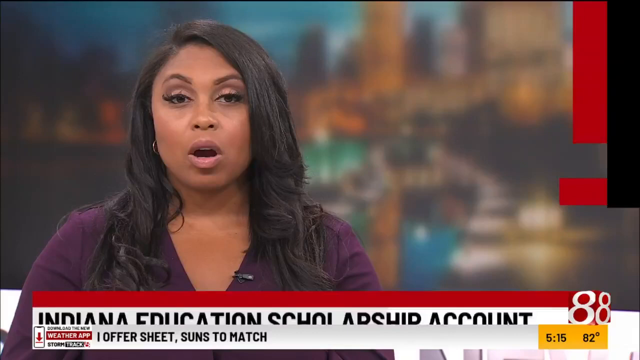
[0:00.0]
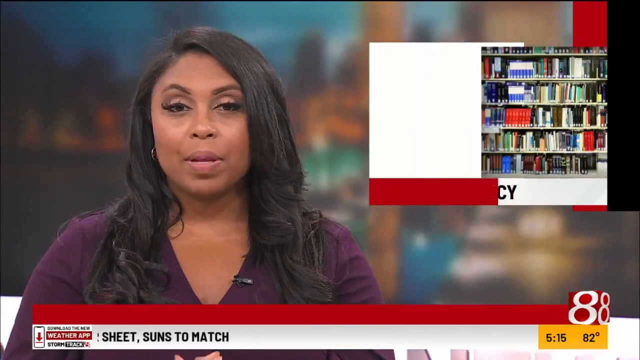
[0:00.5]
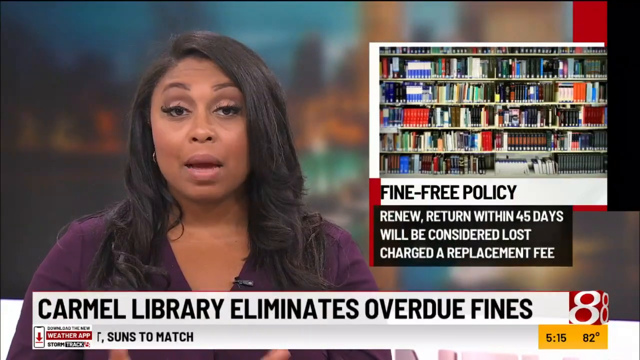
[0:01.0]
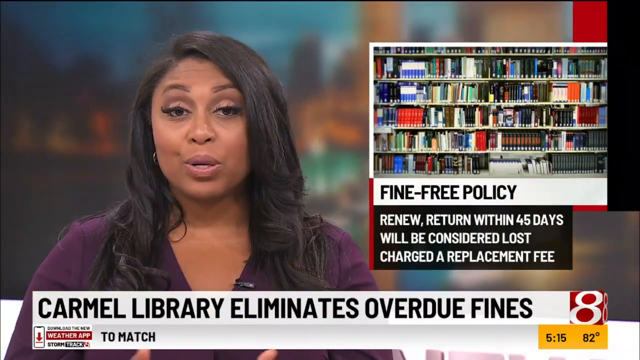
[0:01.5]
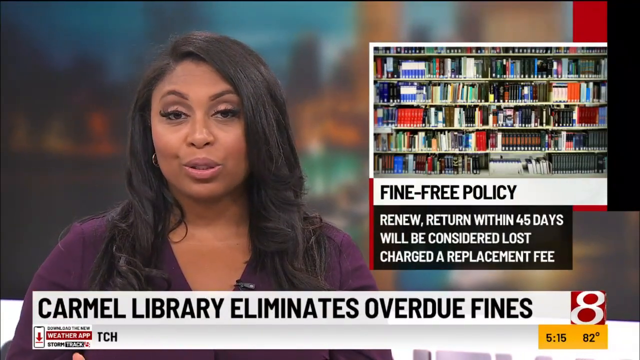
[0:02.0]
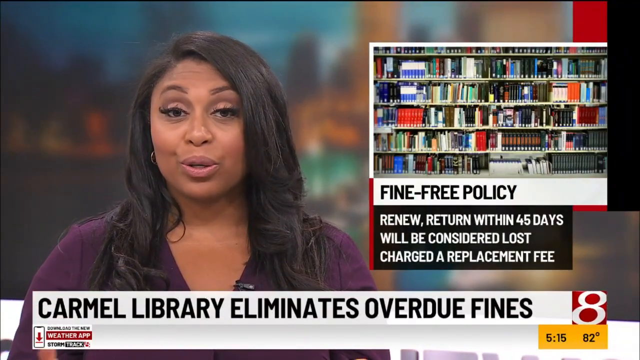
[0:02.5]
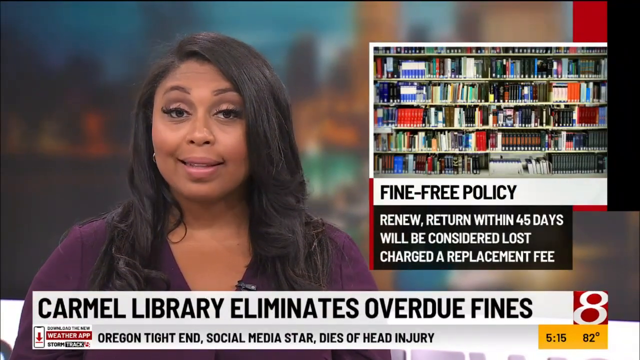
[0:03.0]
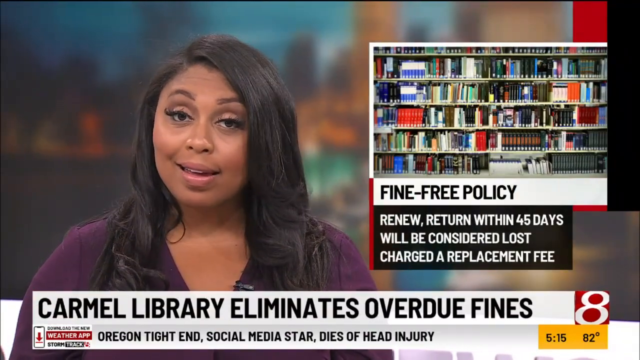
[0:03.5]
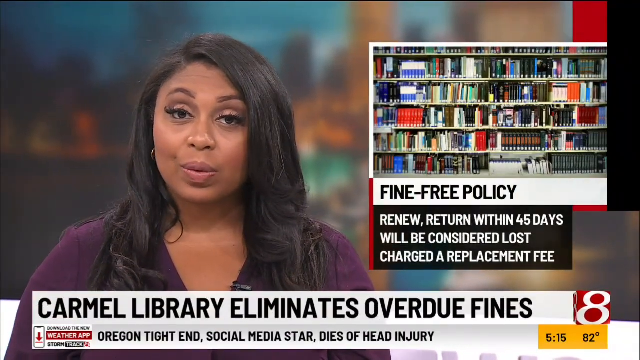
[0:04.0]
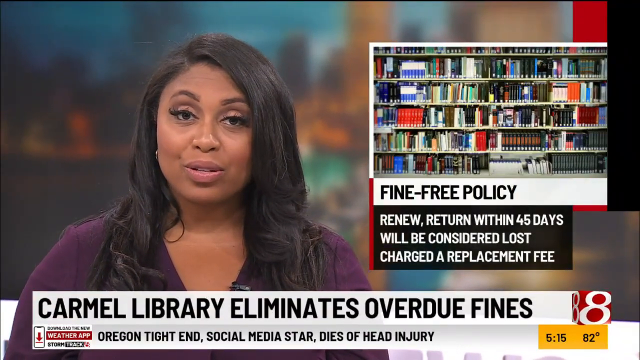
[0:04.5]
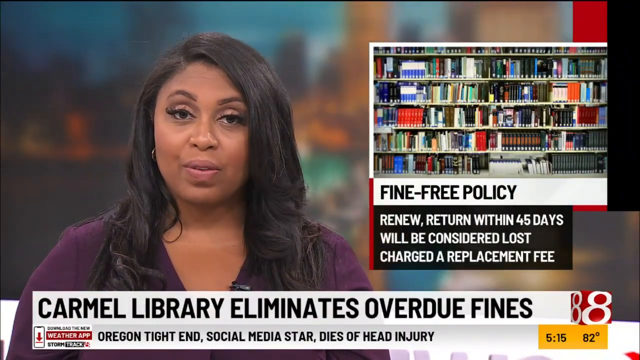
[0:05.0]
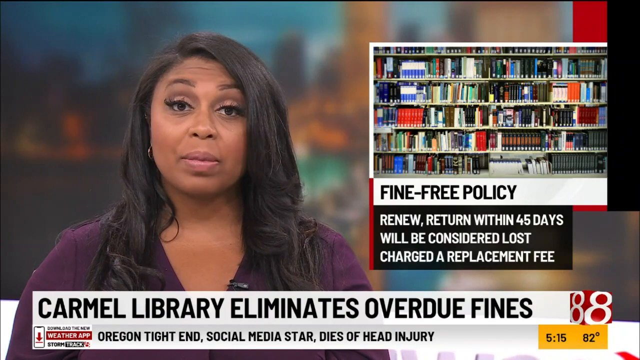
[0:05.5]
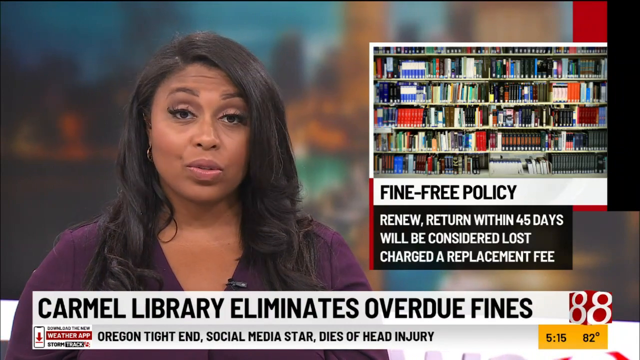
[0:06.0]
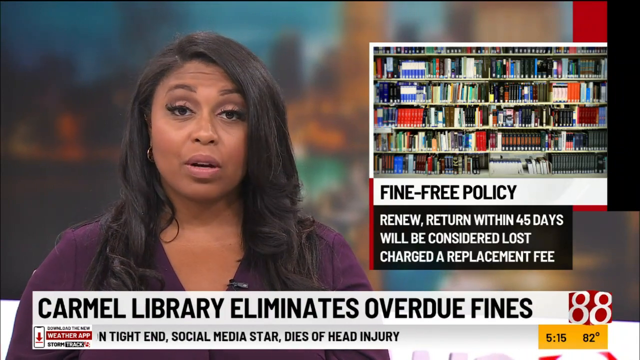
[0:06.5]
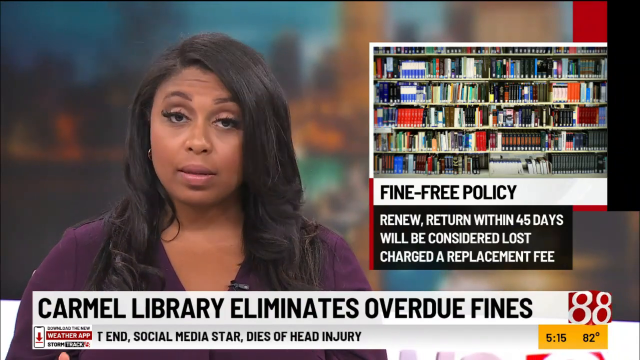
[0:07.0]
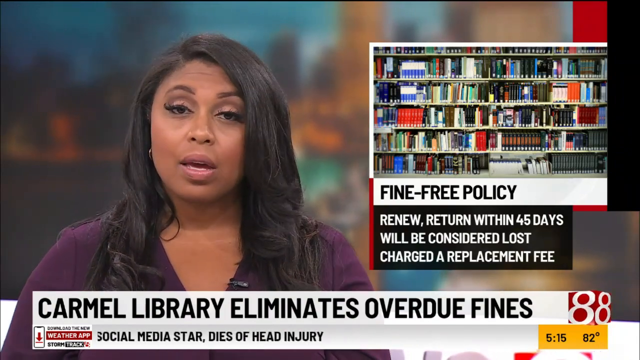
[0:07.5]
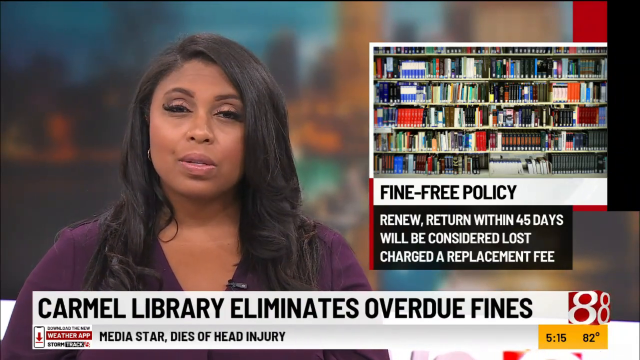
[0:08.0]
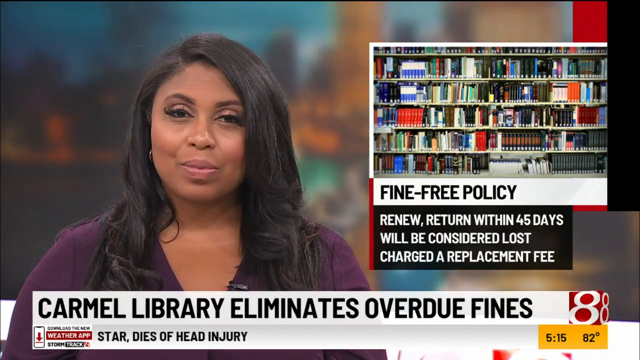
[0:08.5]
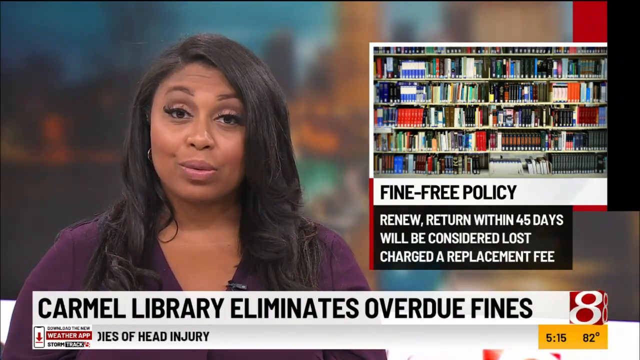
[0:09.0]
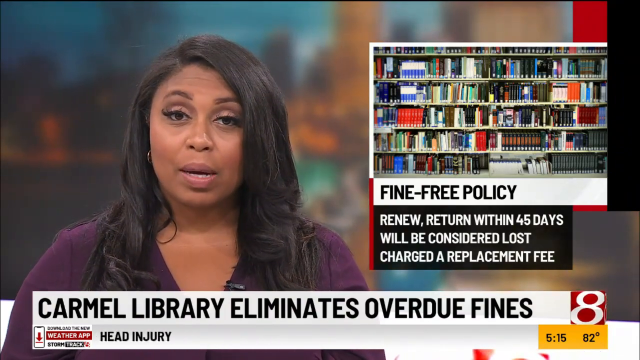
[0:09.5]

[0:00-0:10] A news story about the Carmel Library eliminating overdue fines begins with a news correspondent, an African American woman with long brown hair wearing a purple shirt, with a microphone attached to her shirt. In the upper right-hand corner is a graphic with books on shelves. Underneath the image, text reads "fine free policy. Renew, return within 45 days will be considered lost, charged a replacement fee." The report is on channel 88, the time is 5:15, and it is currently 82 degrees. A ticker along the bottom shows updating news stories.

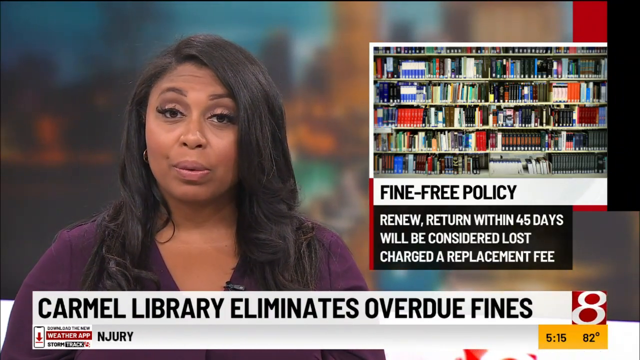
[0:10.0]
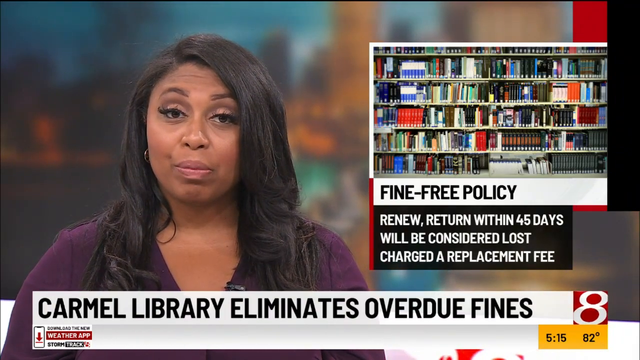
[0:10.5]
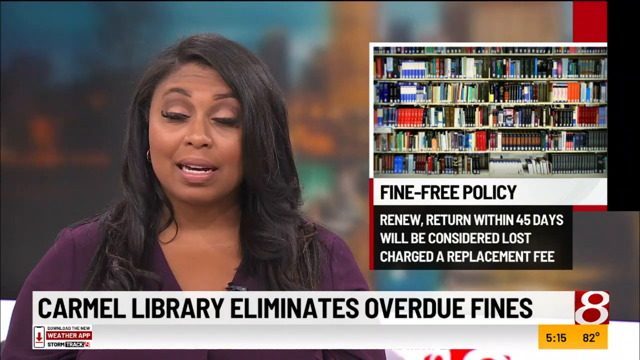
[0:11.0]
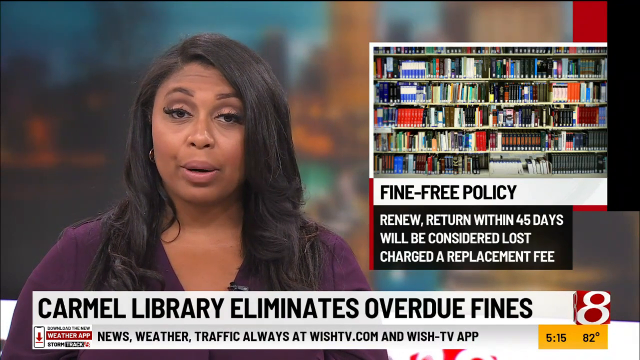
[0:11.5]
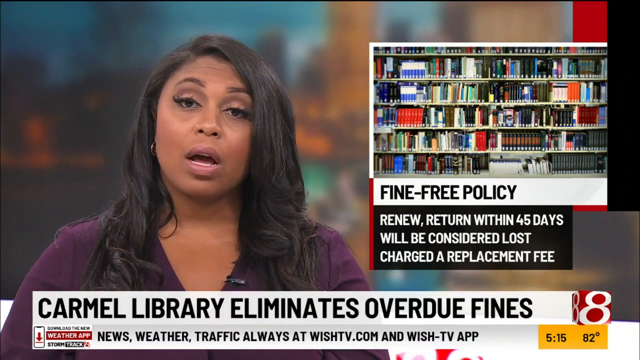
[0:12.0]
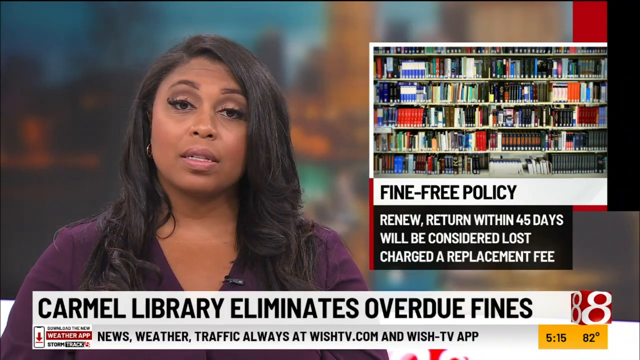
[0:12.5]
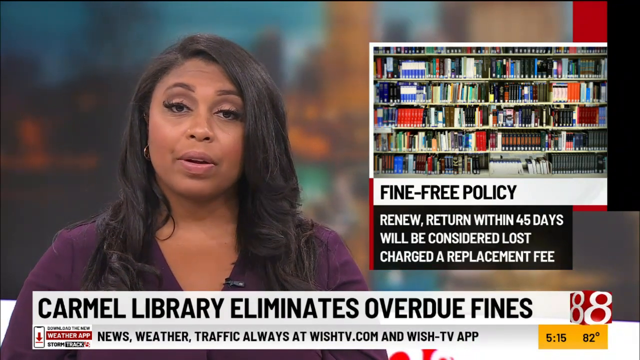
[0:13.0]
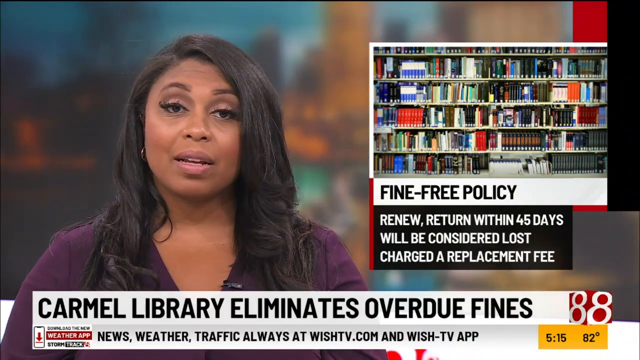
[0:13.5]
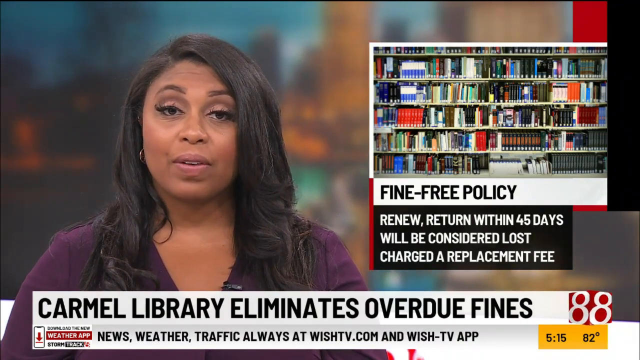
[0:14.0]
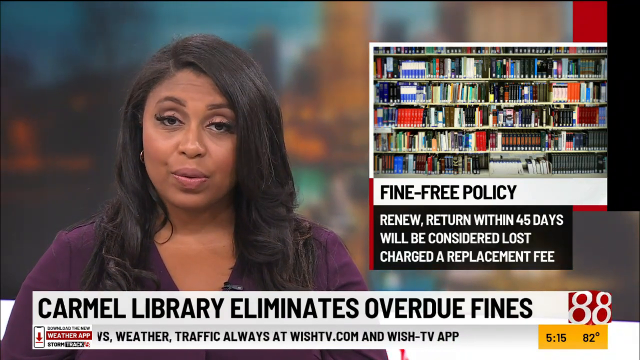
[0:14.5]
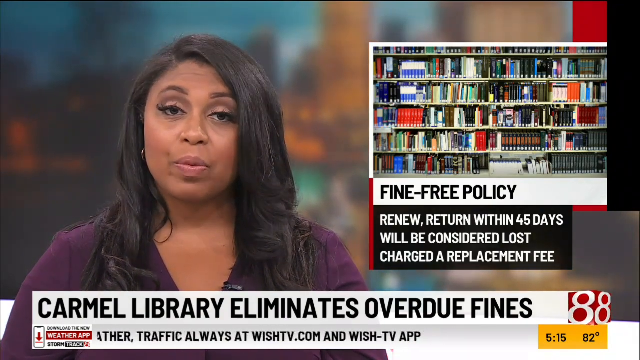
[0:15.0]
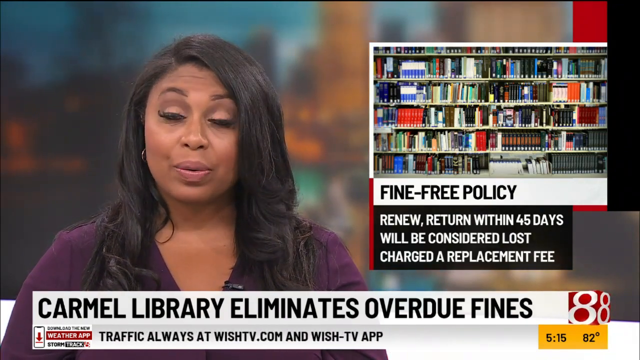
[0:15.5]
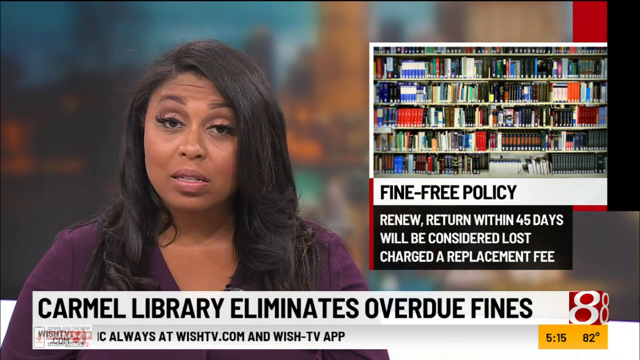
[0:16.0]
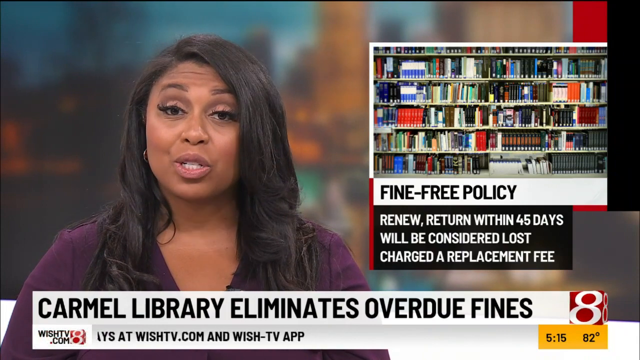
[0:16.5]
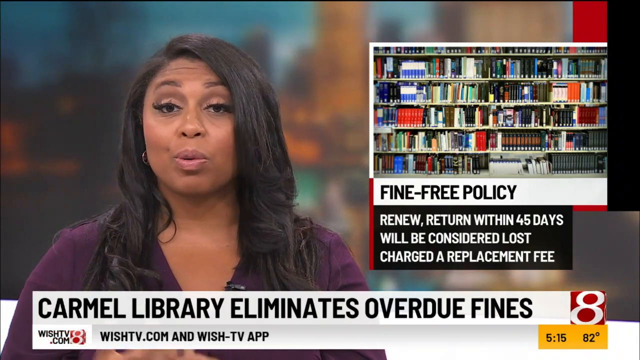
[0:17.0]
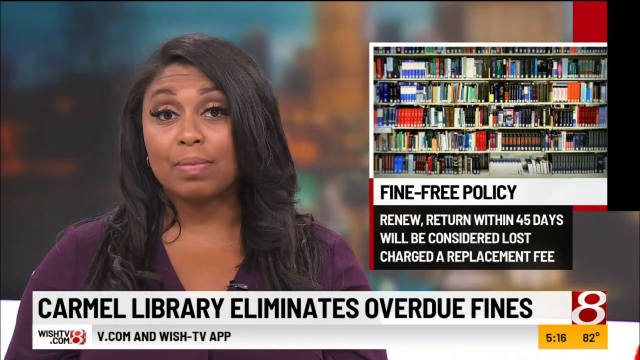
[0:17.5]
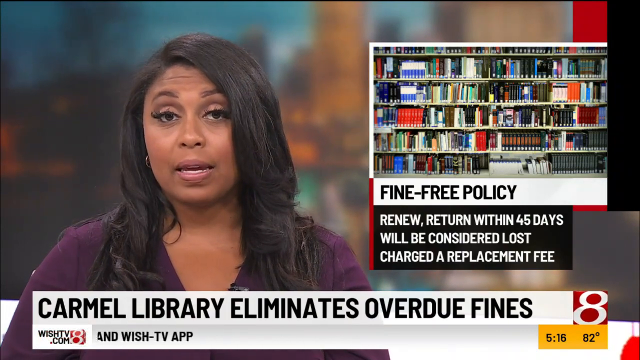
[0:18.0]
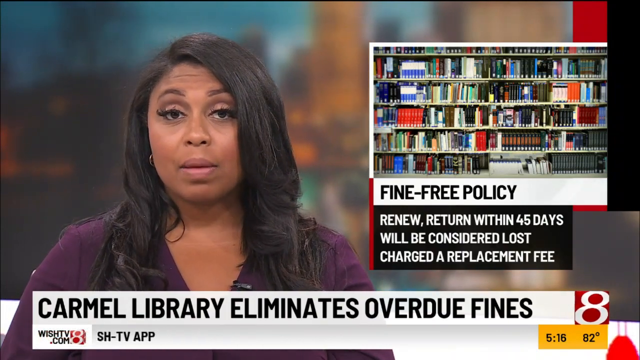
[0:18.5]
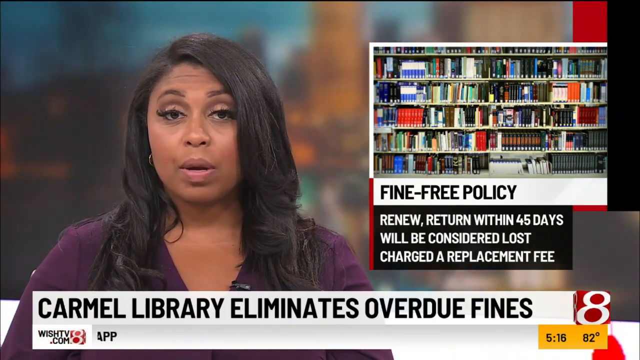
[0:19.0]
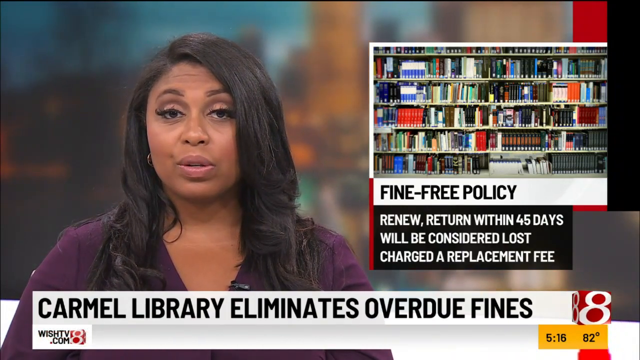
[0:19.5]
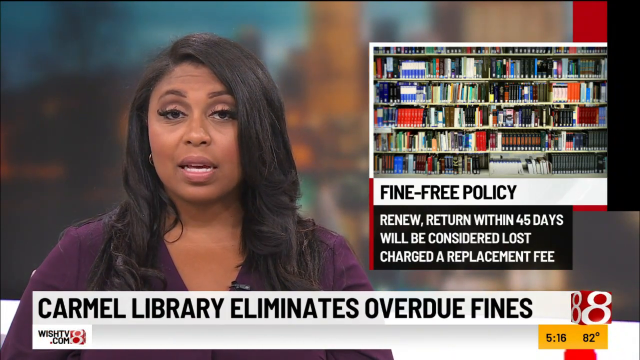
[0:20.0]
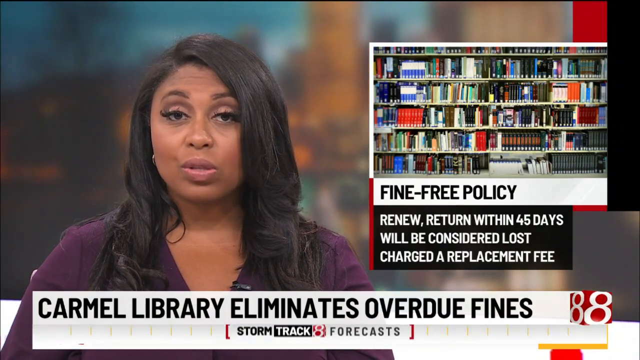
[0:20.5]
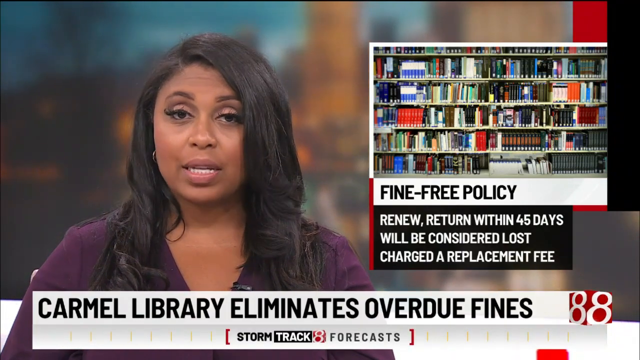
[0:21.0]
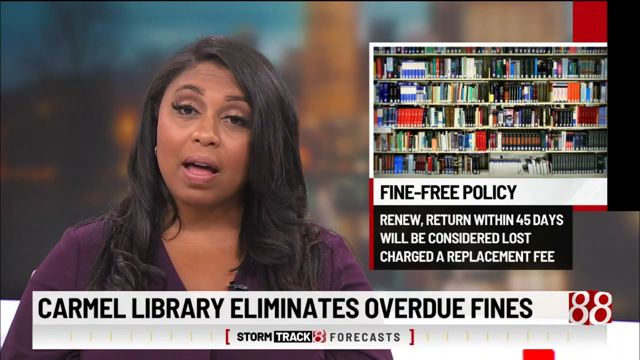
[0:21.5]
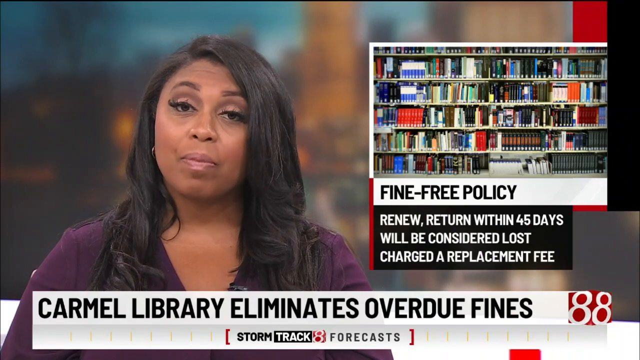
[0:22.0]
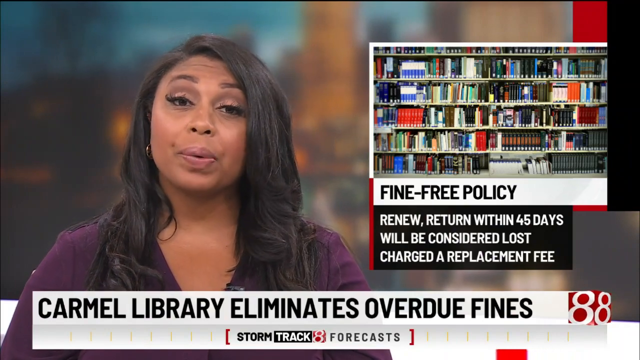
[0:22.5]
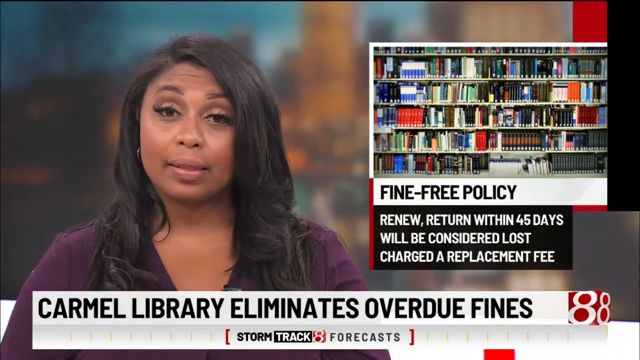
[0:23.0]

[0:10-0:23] On channel 88, the African American correspondent continues reporting on the Carmel Library eliminating its overdue fines. She is a middle-aged African American woman with long brown hair, wearing a purple shirt, with a microphone attached to her shirt. In the upper right-hand corner is an image of several books on bookshelves. Underneath the image, text reads "fine-free policy. Renew, return within 45 days, will be considered lost, charged a replacement fee." The time shown is 5:15 and the temperature is 80 degrees. A ticker with updating news scrolls across the bottom.